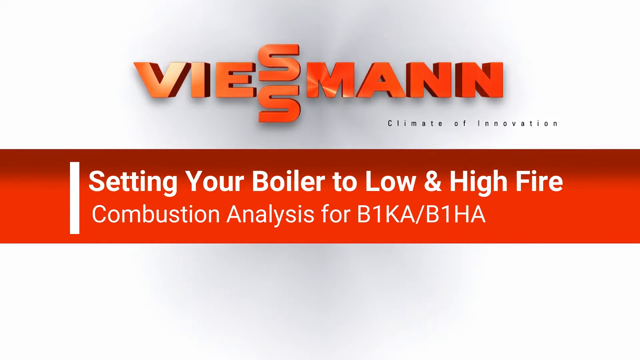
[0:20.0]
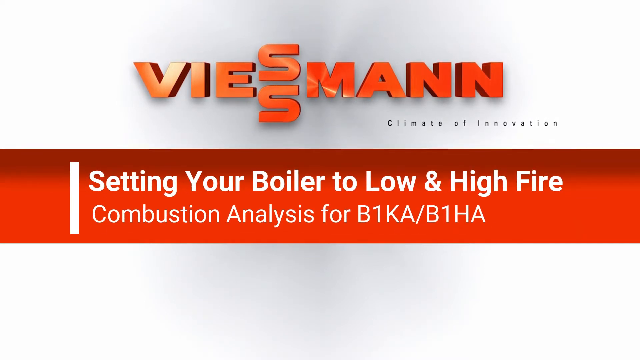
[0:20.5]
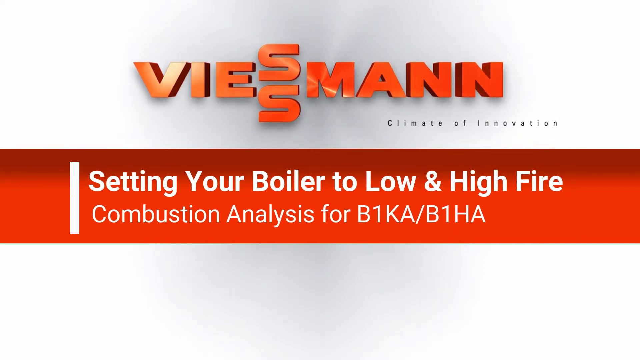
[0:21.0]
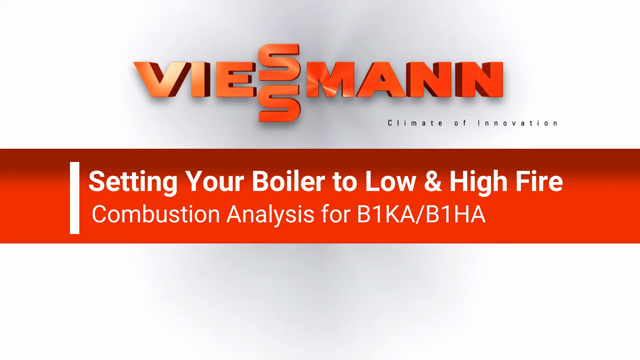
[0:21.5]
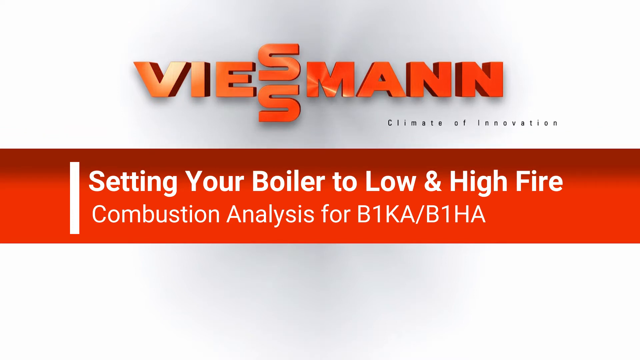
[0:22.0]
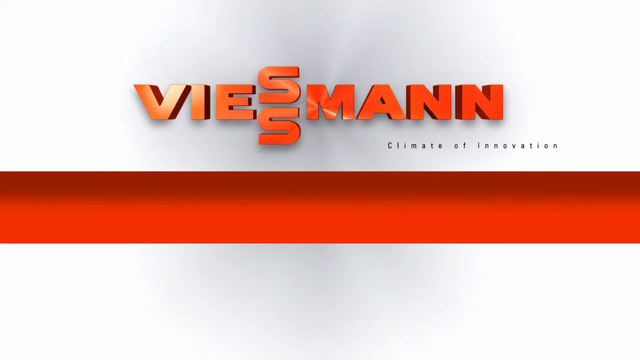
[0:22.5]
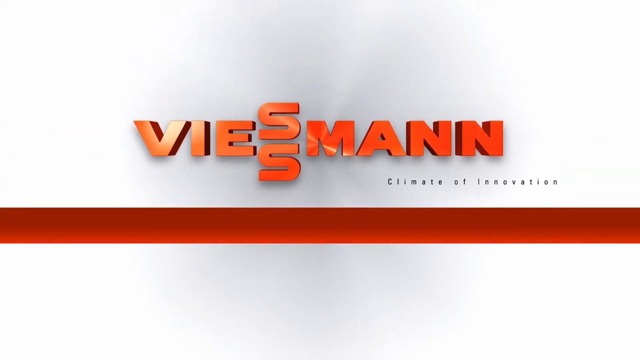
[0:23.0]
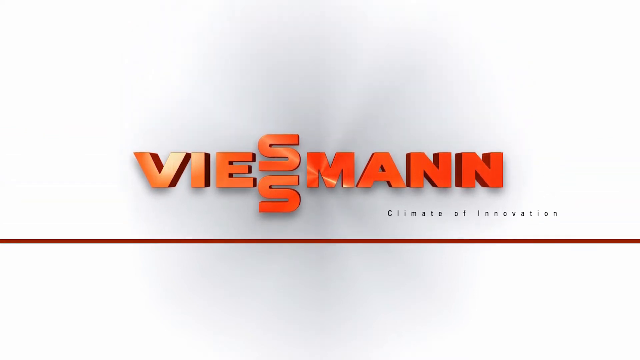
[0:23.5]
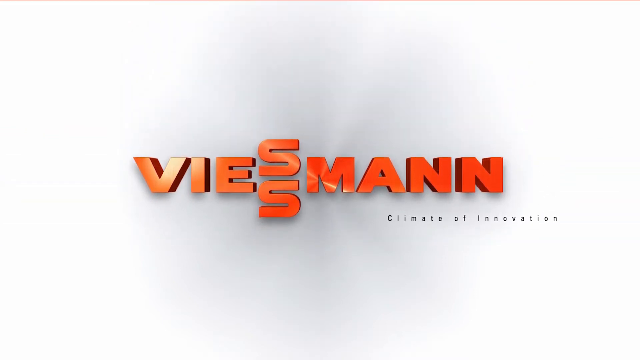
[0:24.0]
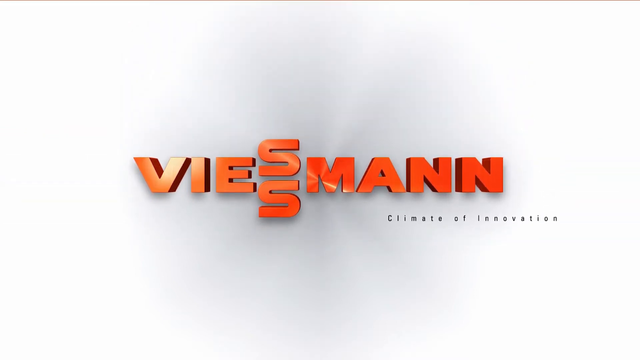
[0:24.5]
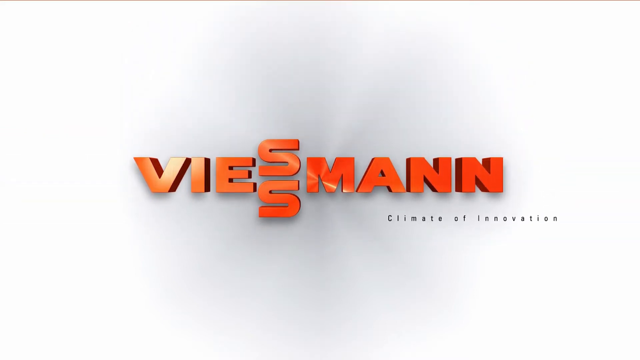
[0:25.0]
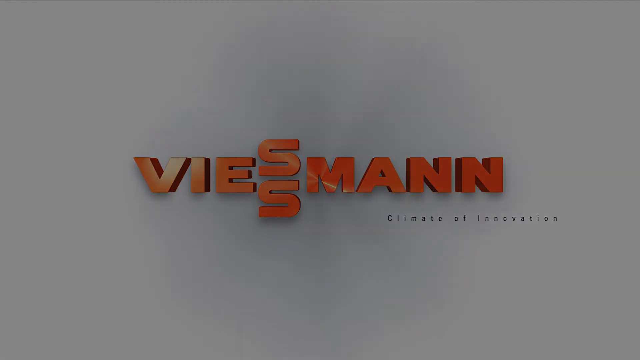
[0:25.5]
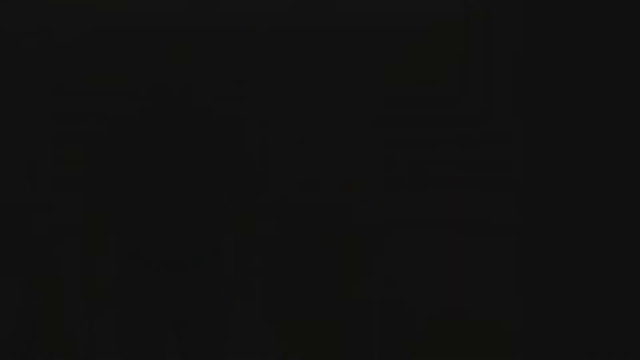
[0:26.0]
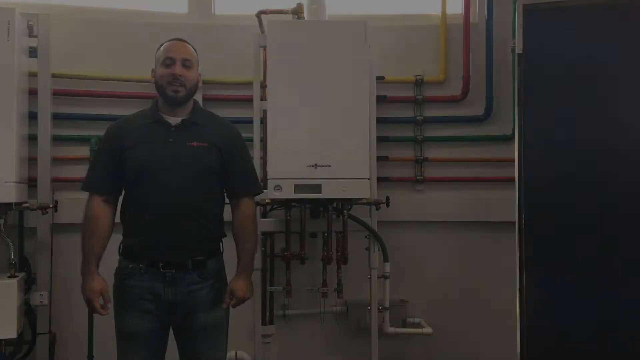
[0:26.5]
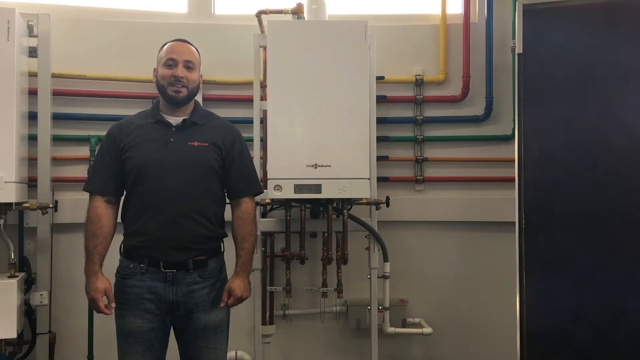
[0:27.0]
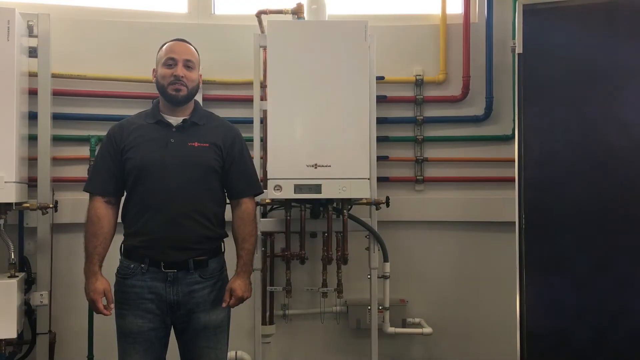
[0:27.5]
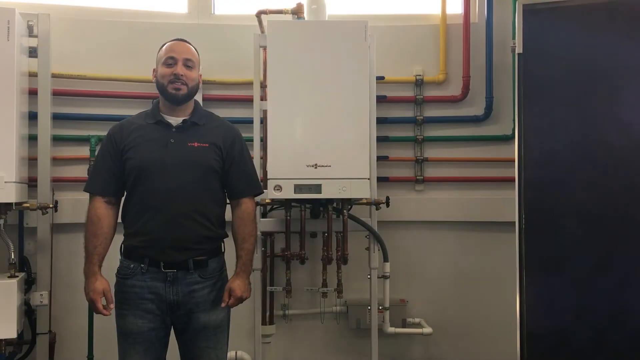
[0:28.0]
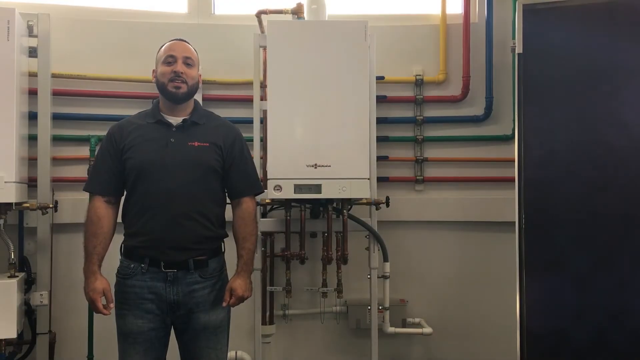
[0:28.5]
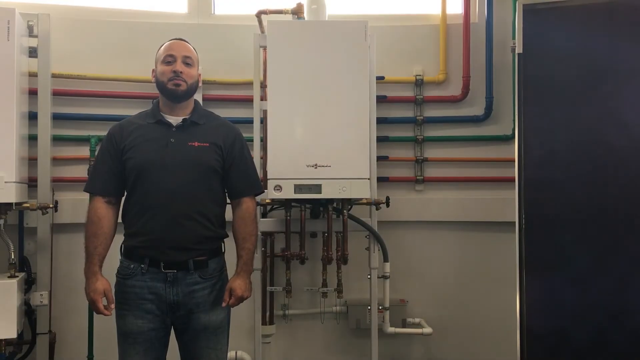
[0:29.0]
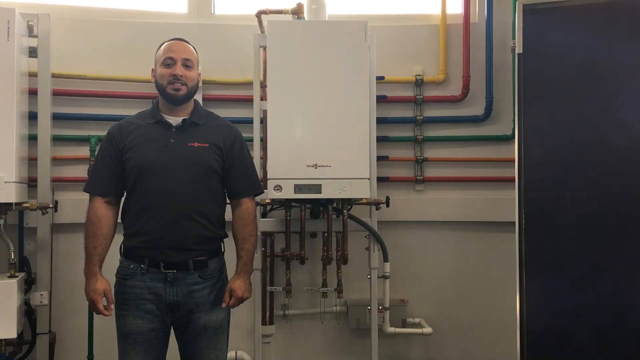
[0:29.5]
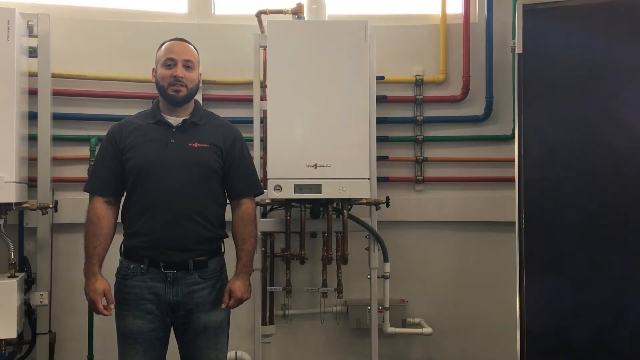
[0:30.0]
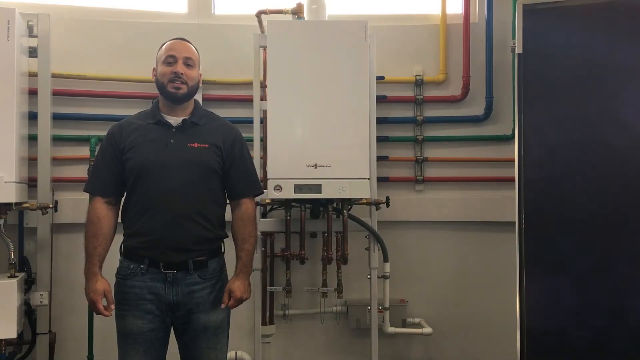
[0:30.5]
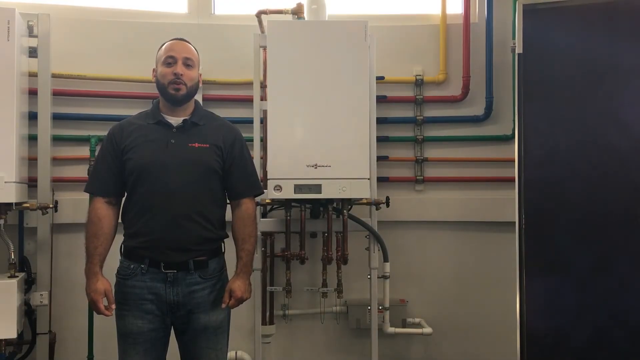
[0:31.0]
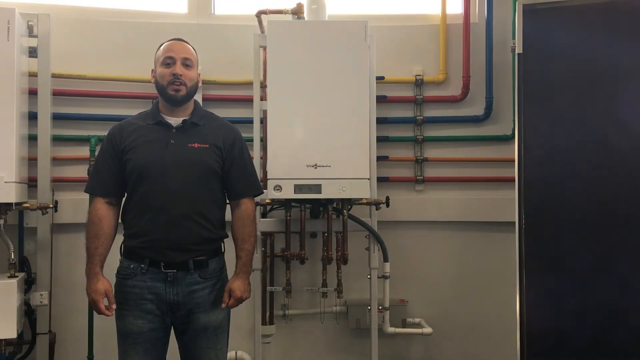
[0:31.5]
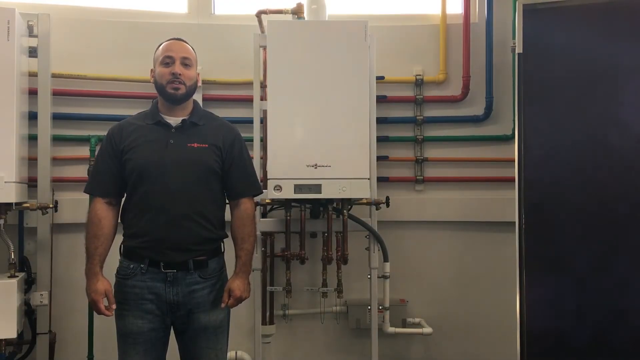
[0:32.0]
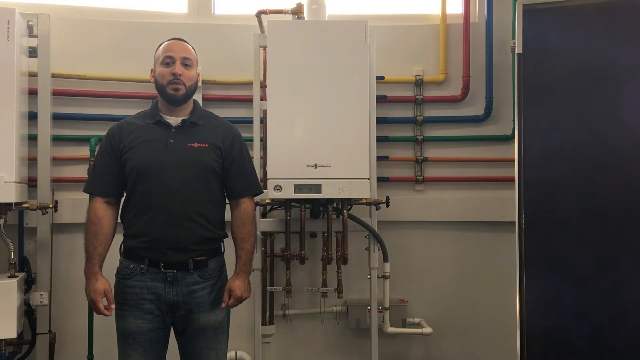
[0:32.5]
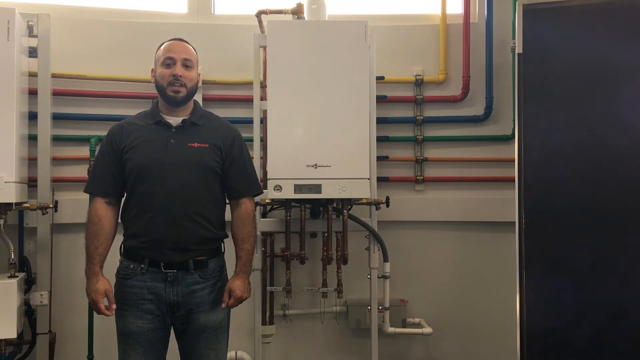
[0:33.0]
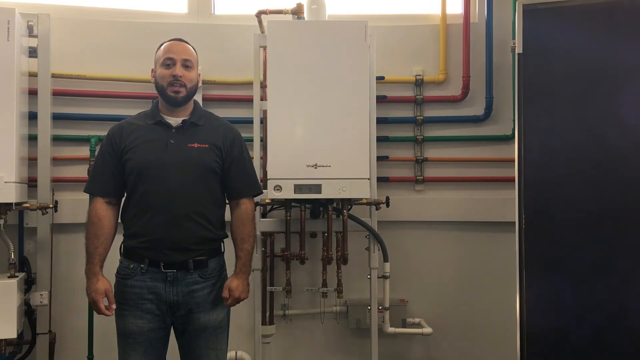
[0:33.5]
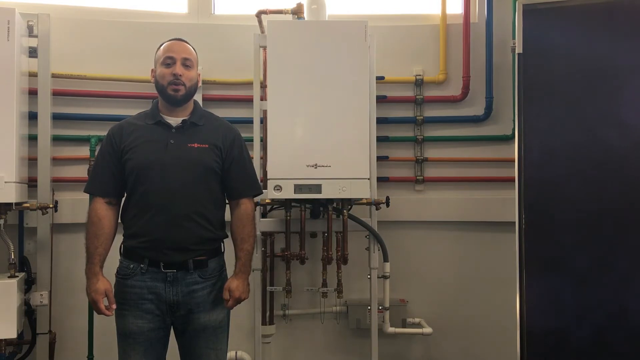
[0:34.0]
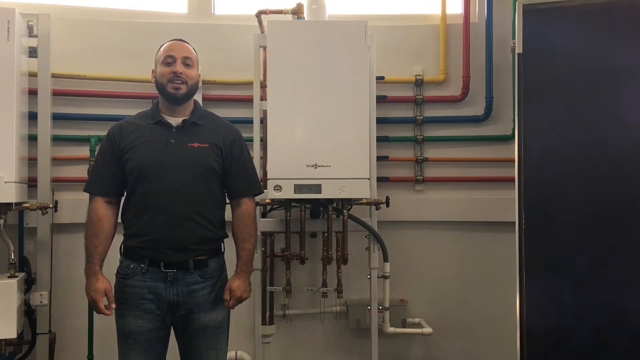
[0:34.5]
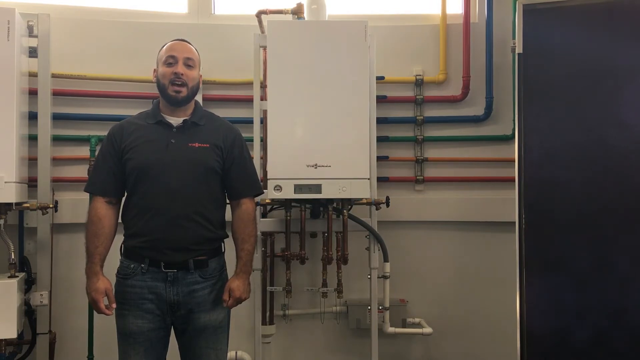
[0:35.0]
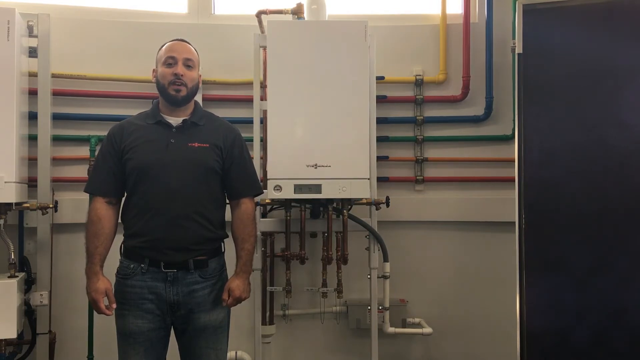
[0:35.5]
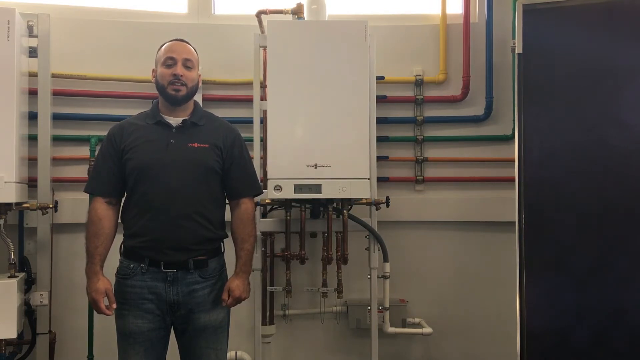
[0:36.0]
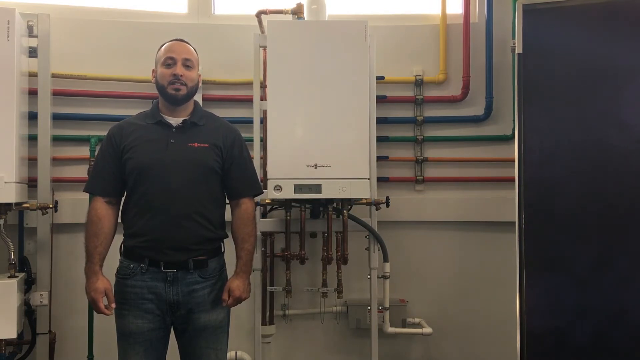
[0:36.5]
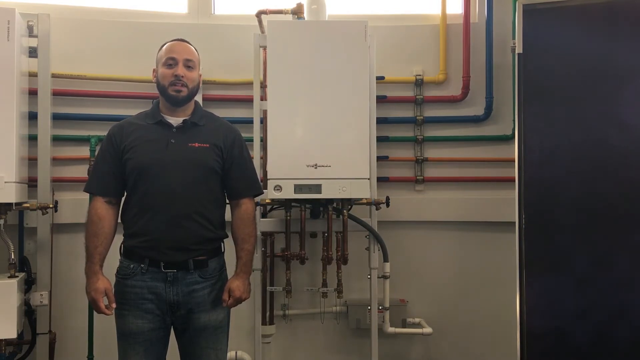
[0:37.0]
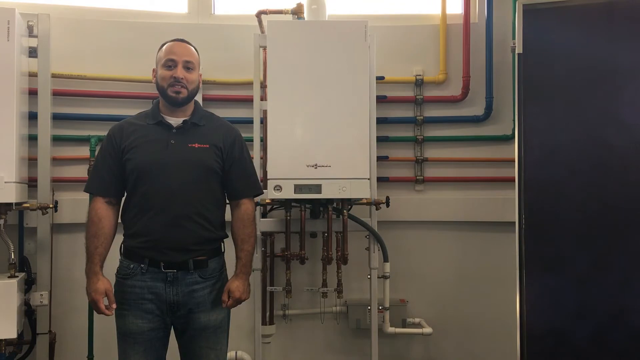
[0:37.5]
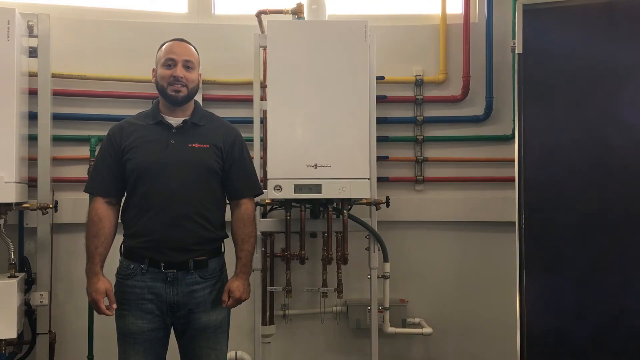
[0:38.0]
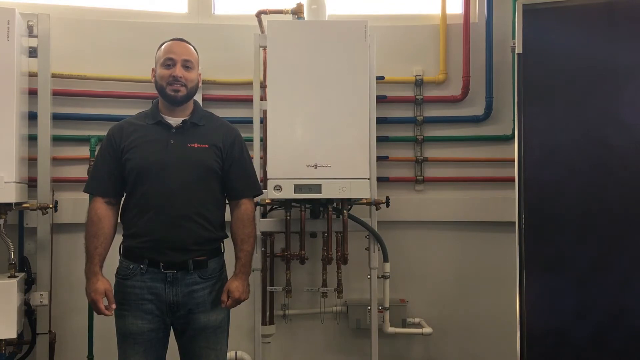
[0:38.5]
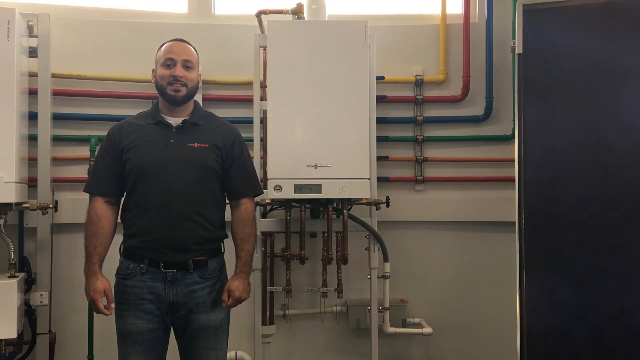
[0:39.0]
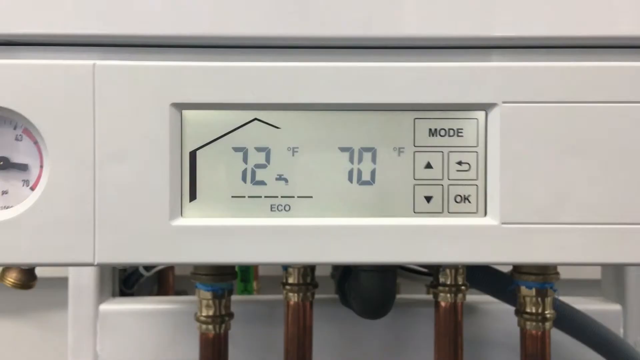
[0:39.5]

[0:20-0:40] The title card with "Climate of Innovation" is on screen, with grey letters on a white background. A man then appears with a boiling system behind him made of many tubes in different colors: white, red, blue, green, orange and yellow. He wears a grey short-sleeved shirt, jeans and a black belt, and has a beard, short hair and a very round face. He is talking and smiling. The video then shows the boiler display with temperatures of 70 and 72 degrees Fahrenheit, with "Eco" shown, and 70 degrees associated with the inside of the house and the faucets.